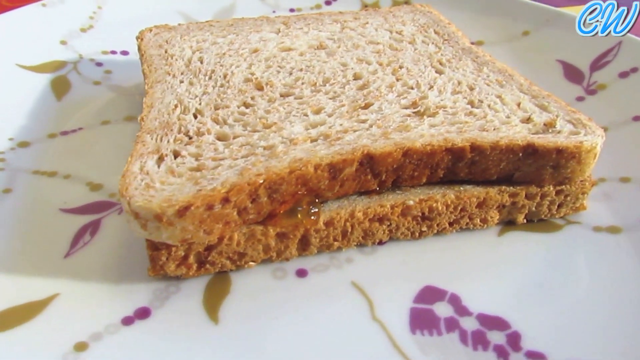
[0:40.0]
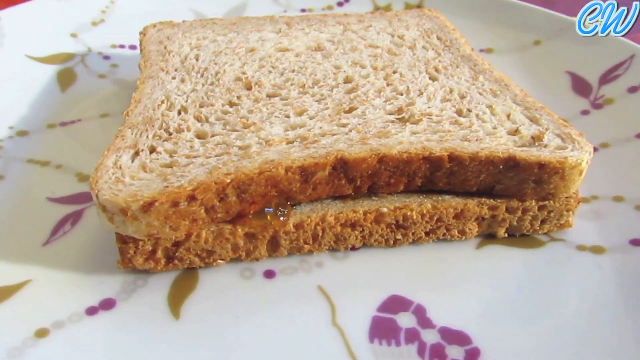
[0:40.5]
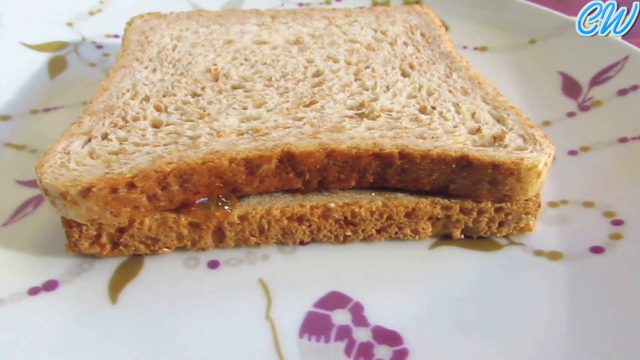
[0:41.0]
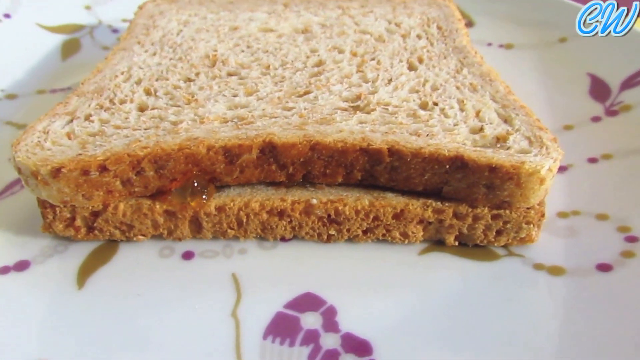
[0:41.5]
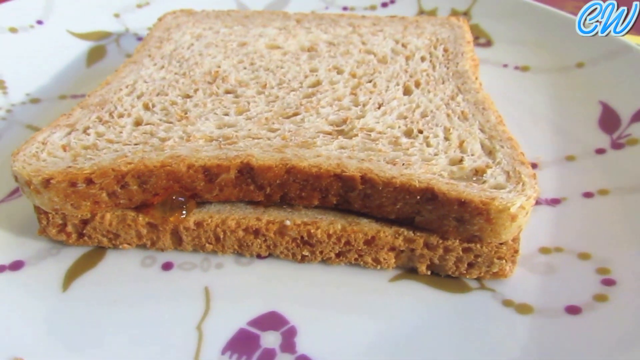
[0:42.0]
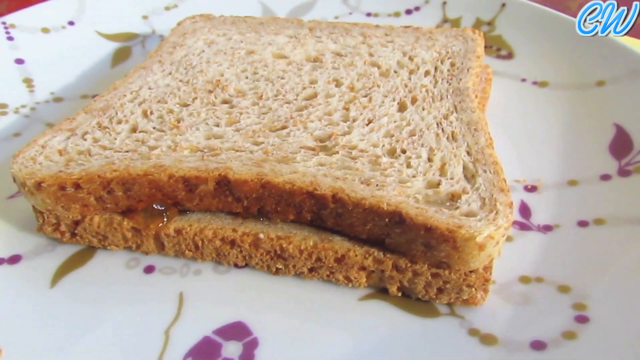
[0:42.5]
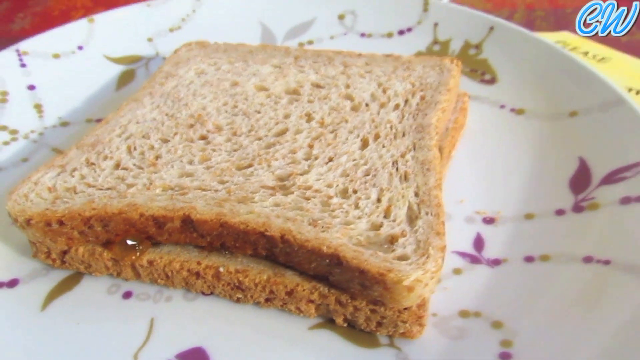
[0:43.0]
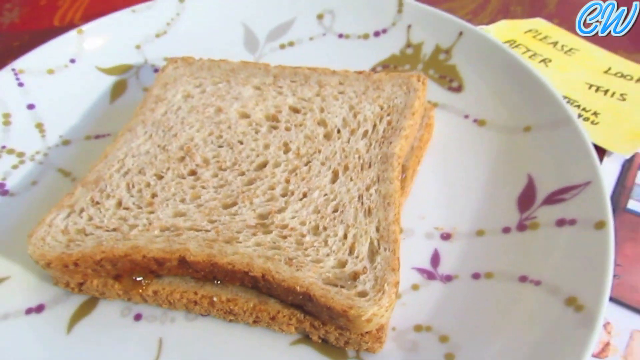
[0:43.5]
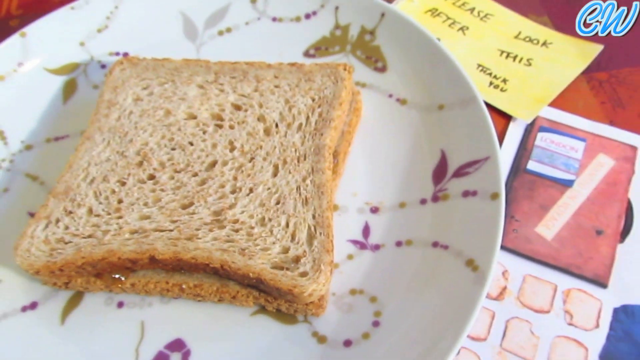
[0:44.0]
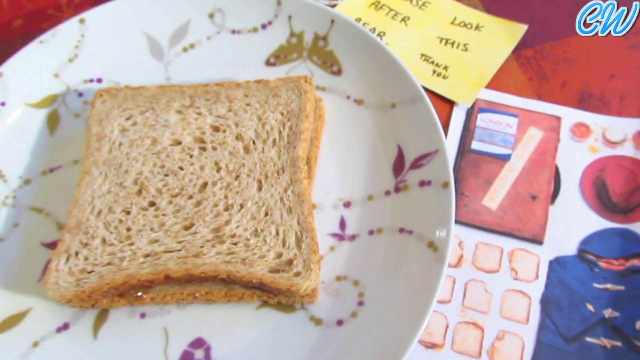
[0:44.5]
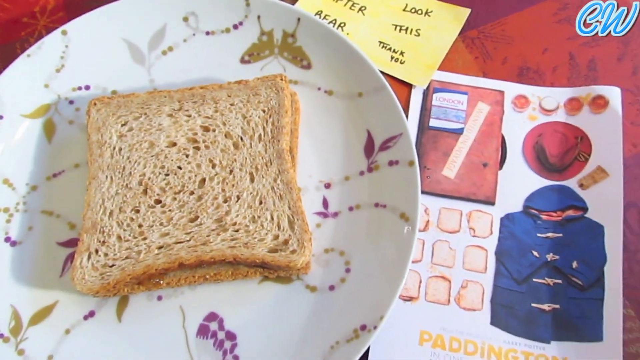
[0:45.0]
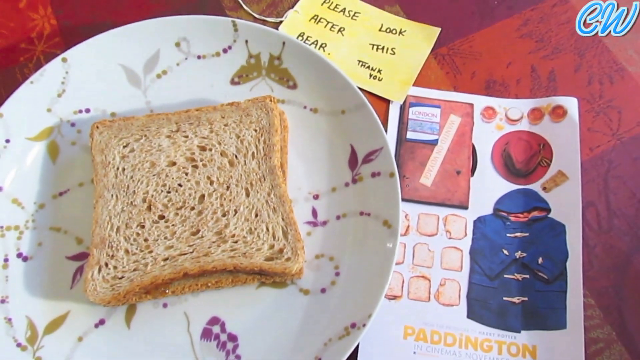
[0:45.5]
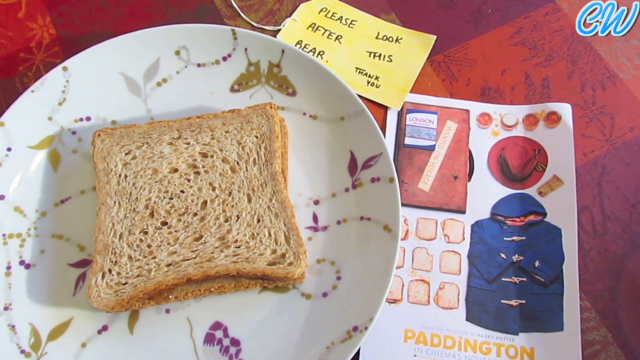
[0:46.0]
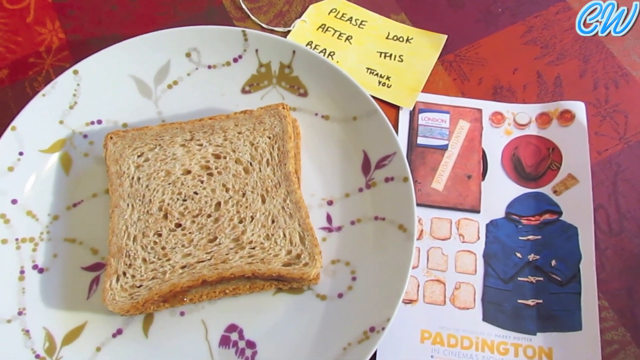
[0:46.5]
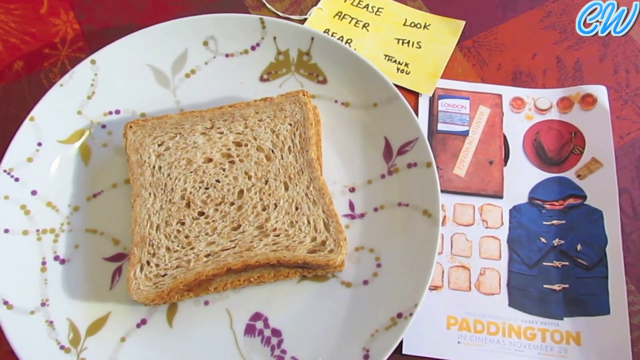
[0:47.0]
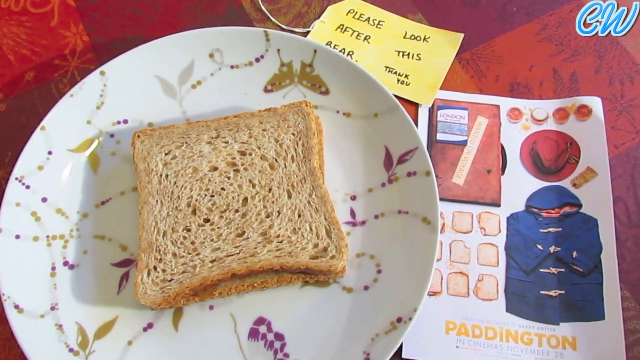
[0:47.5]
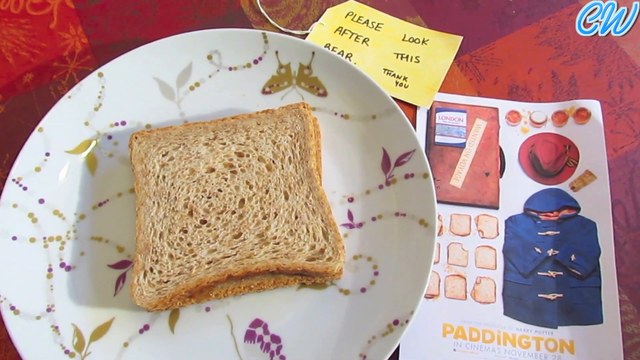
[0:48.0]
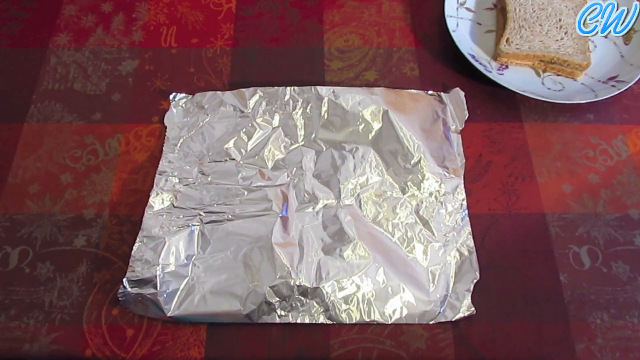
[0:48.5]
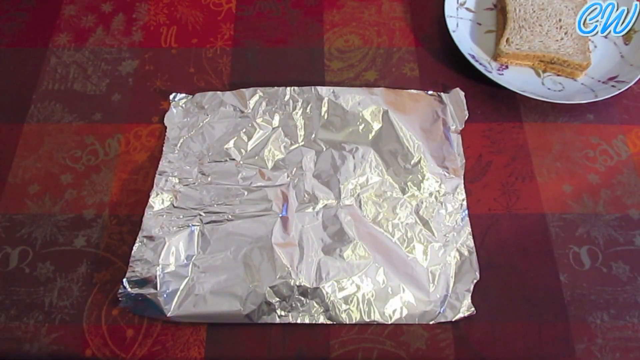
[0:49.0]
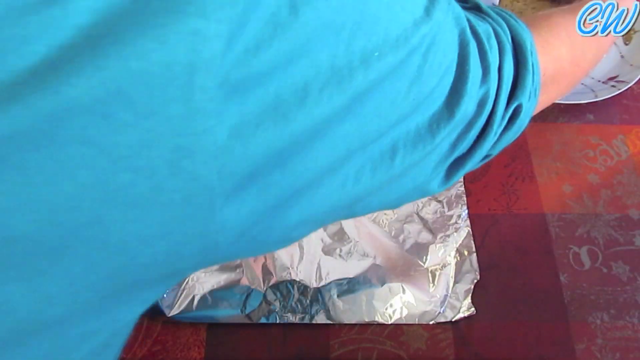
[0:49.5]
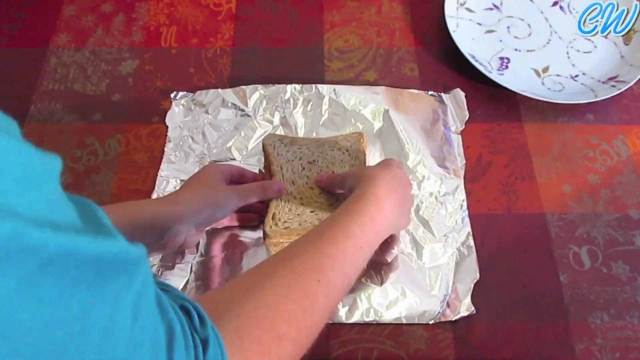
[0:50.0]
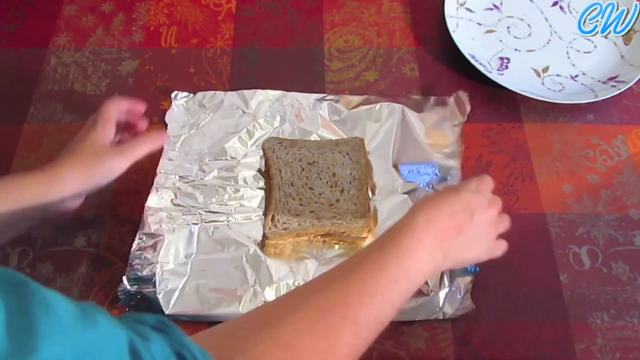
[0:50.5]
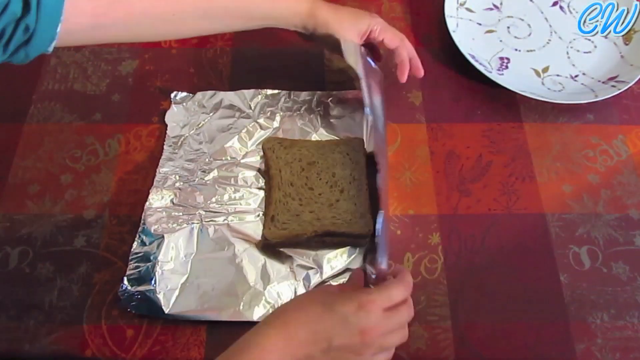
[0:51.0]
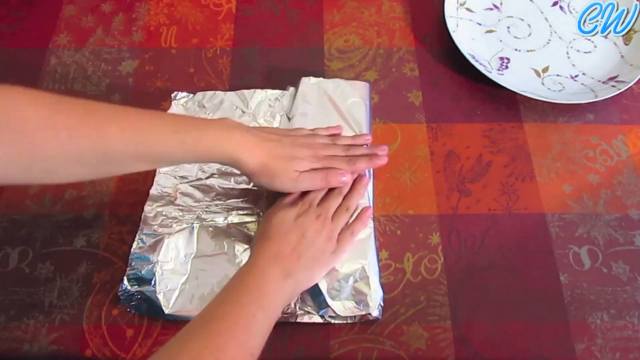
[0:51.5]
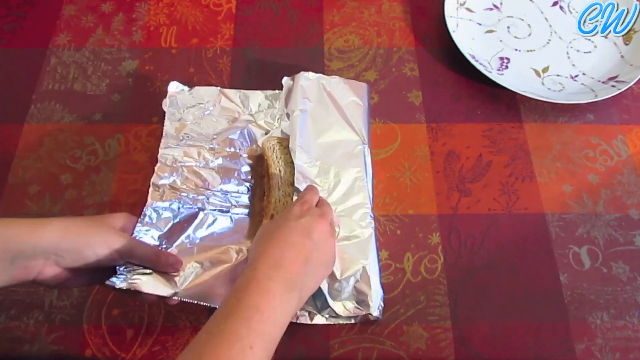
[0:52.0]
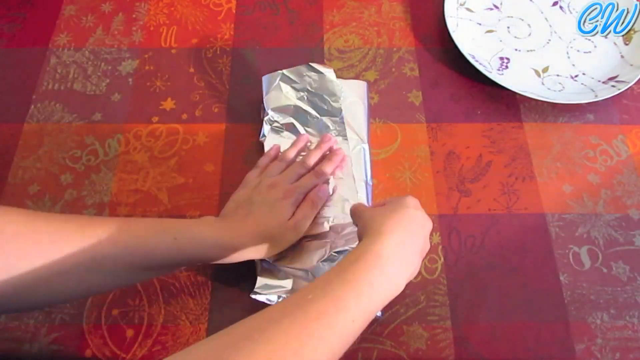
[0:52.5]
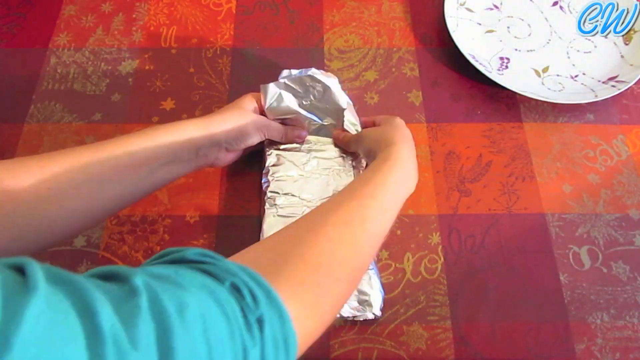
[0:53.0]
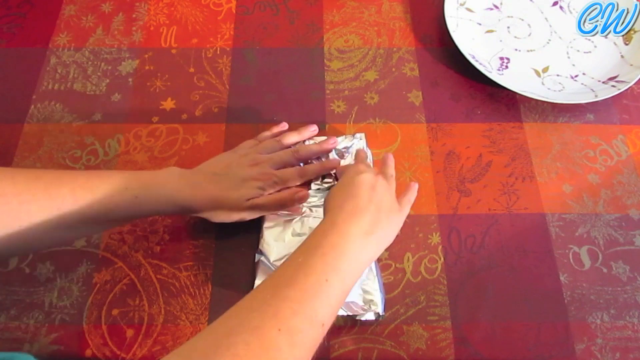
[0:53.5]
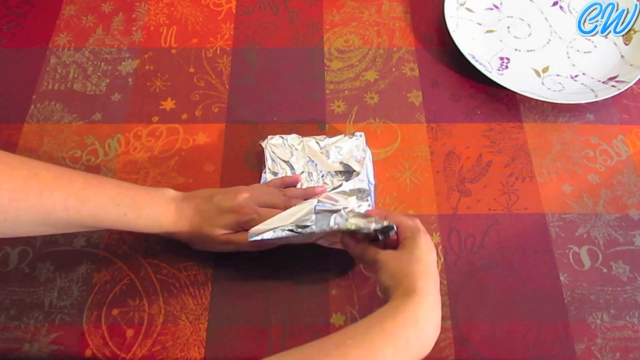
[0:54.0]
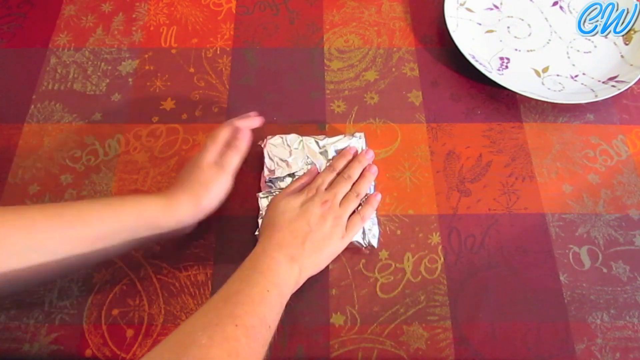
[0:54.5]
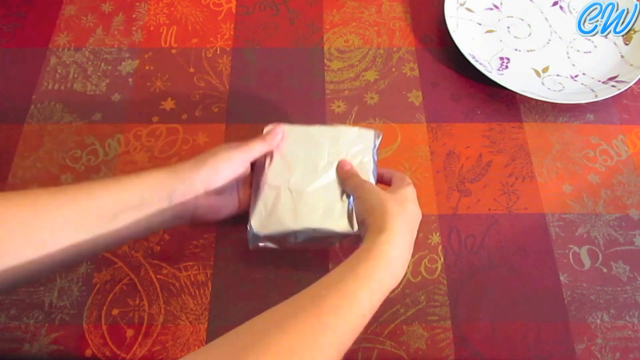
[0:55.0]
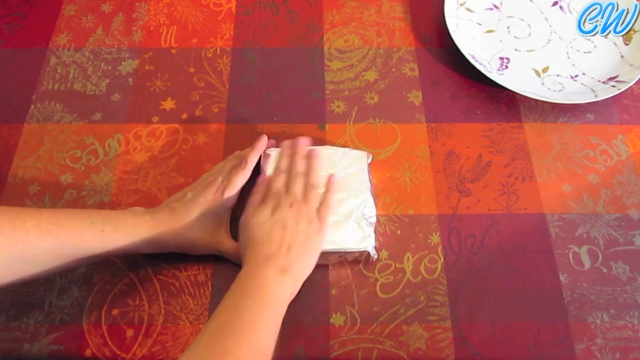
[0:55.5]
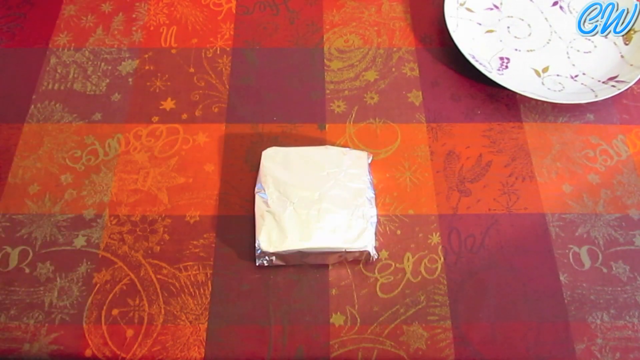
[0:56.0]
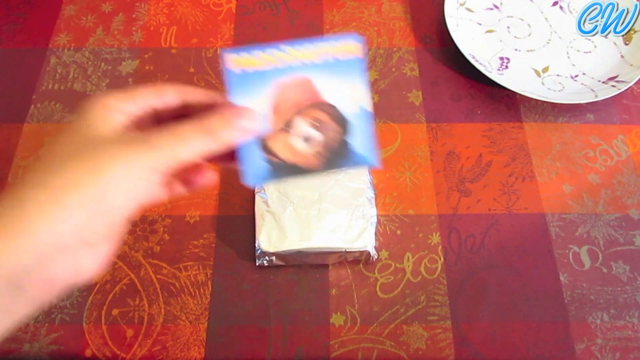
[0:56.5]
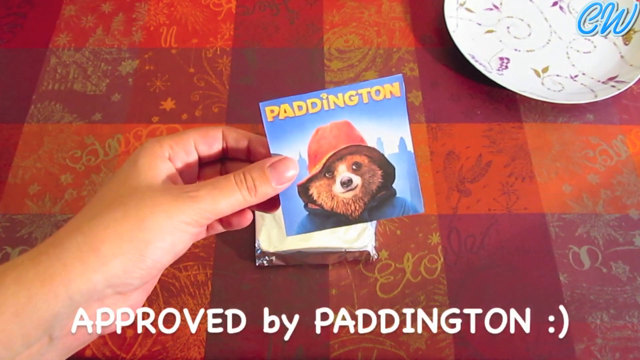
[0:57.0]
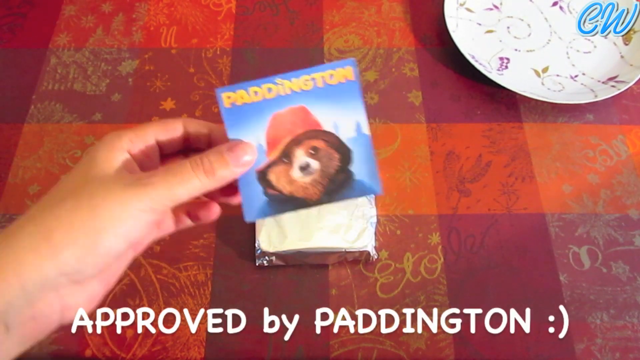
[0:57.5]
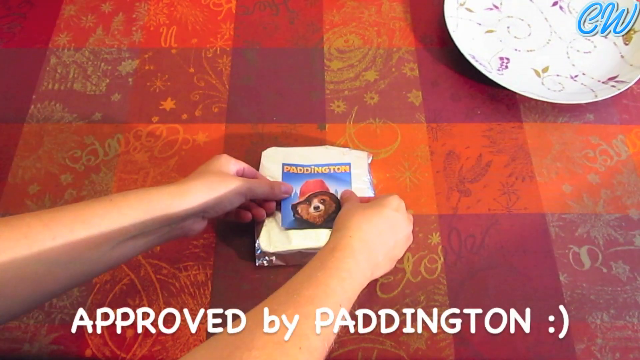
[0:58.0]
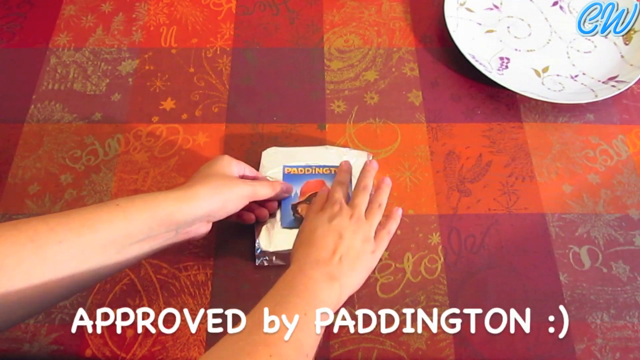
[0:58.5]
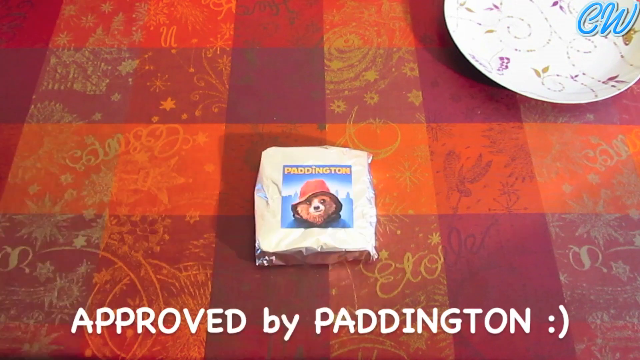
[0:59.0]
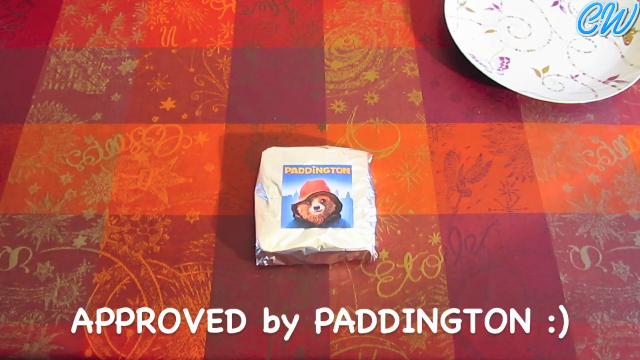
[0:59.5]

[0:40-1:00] A close-up shows two slices of bread made into a sandwich sitting on a plate, with parts of the marmalade sticking out from the crust. The plate has a floral pattern with butterflies and looks to be made of glass. Above the plate is a post-it note that states "Please look after this bear, thank you," and to the right is a magazine cover showing pictures of a raincoat, pieces of bread, a book and a hat. The camera films in close-up in a relatively steady fashion. After a transition, two human hands hold the sandwich, place it inside a square of tinfoil and fold it up so the entire sandwich is closed. At the end, a hand holds a sticker showing the bear with the hat and raincoat on, with a text label underneath that says "approved by Paddington."